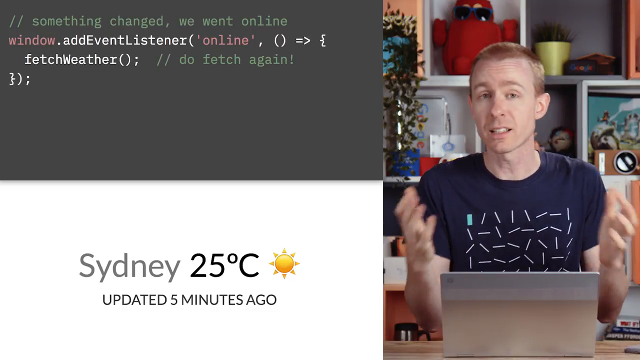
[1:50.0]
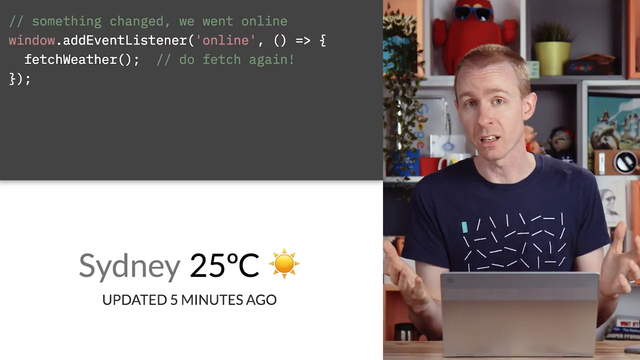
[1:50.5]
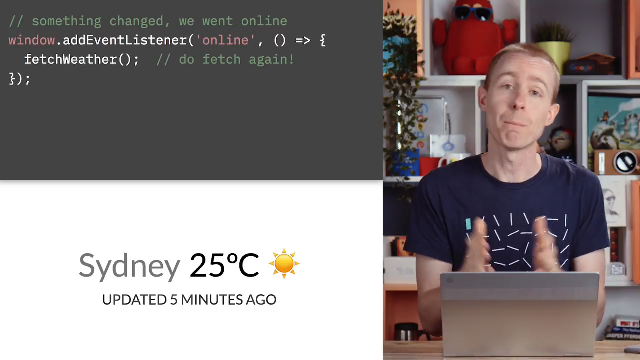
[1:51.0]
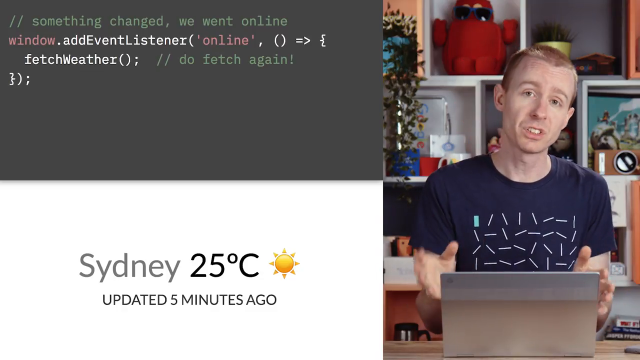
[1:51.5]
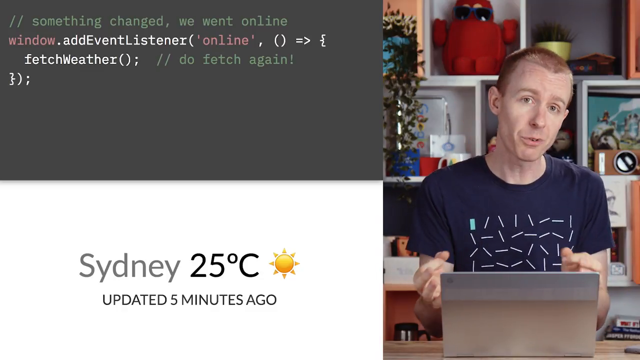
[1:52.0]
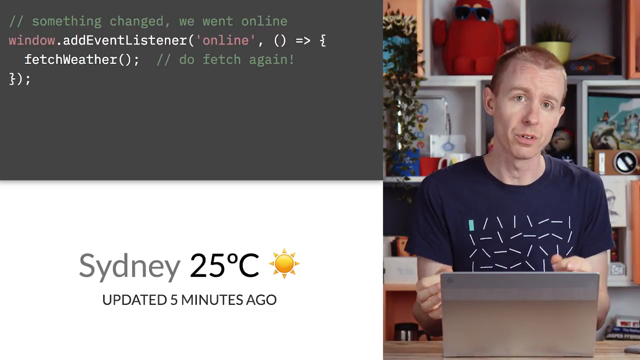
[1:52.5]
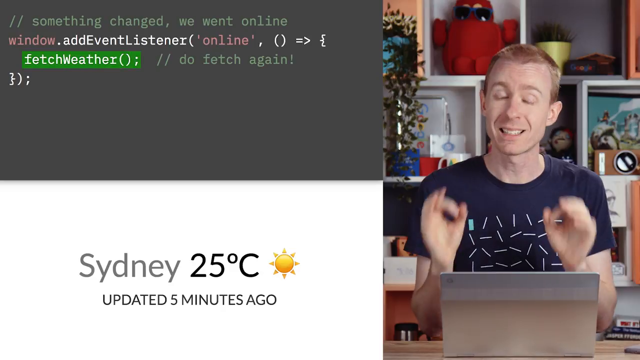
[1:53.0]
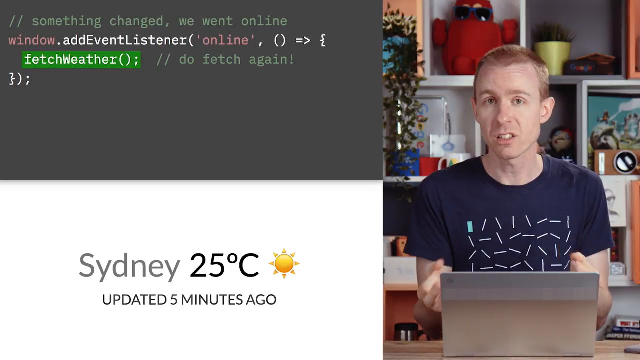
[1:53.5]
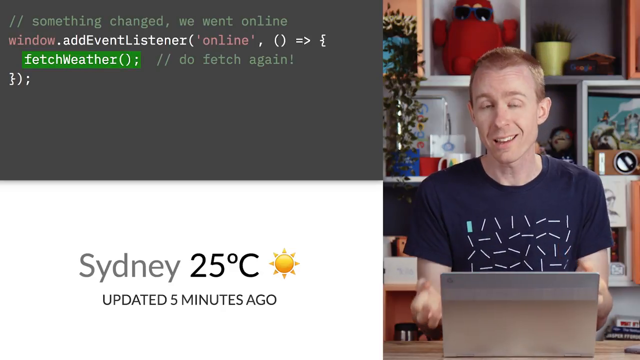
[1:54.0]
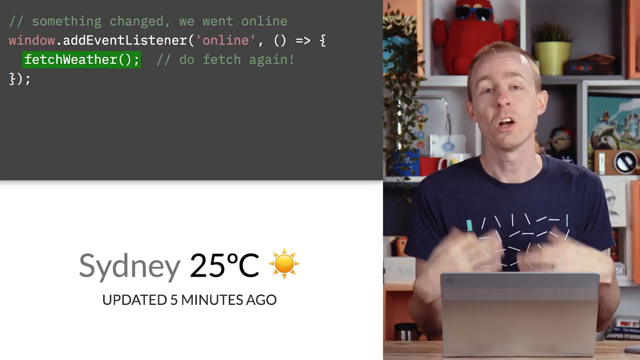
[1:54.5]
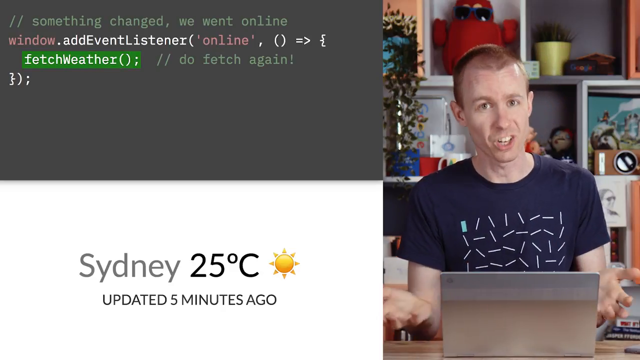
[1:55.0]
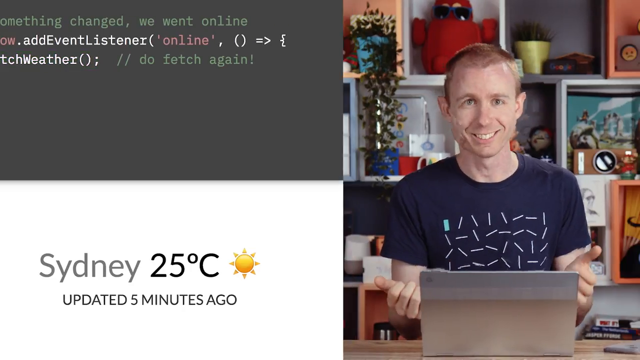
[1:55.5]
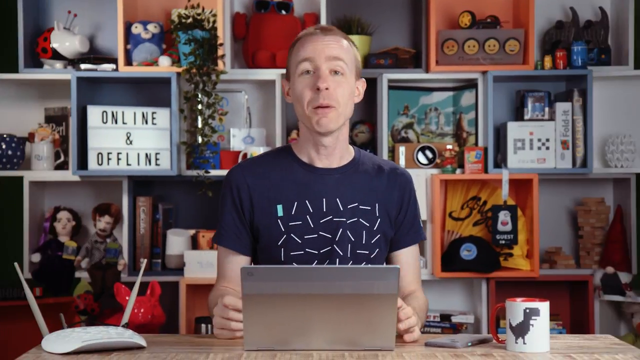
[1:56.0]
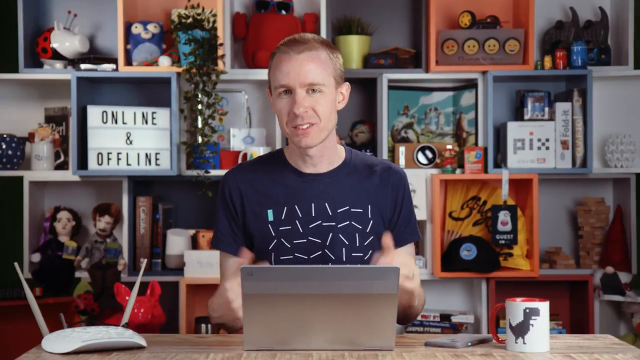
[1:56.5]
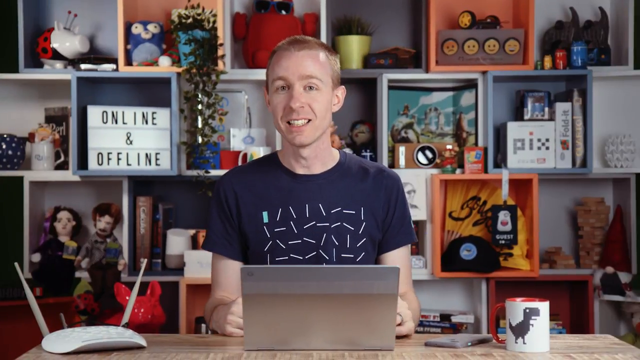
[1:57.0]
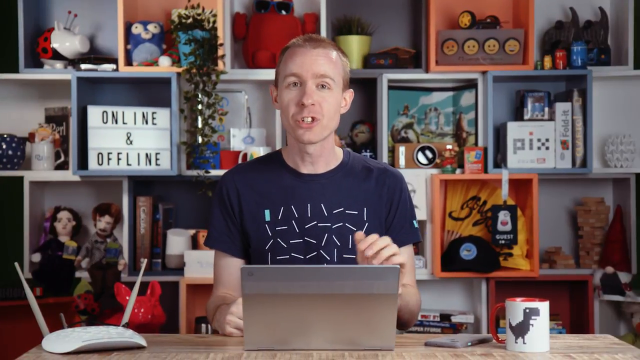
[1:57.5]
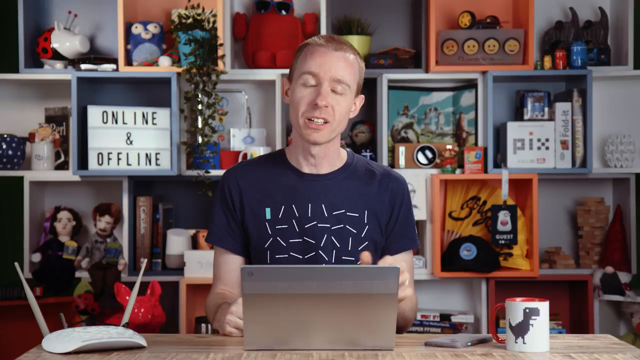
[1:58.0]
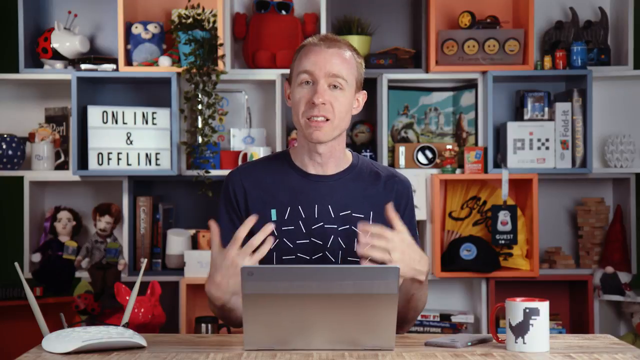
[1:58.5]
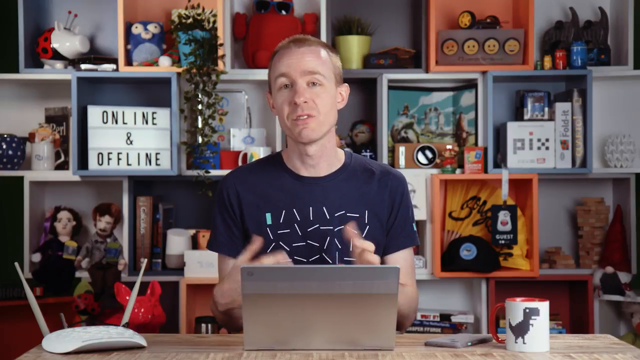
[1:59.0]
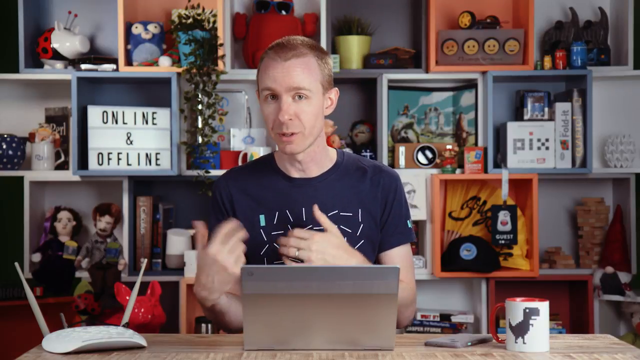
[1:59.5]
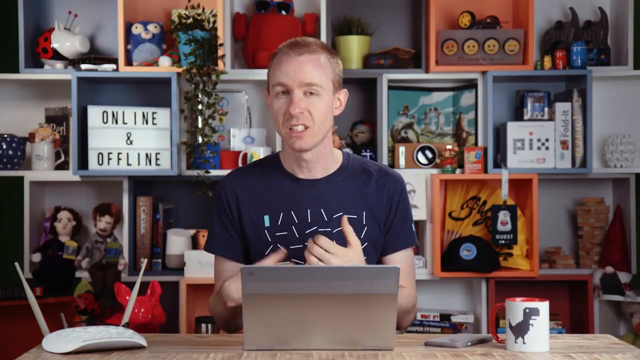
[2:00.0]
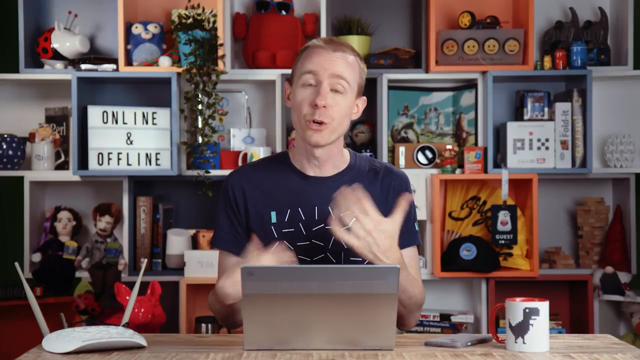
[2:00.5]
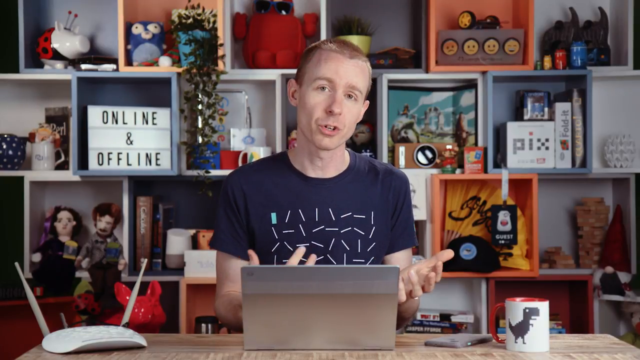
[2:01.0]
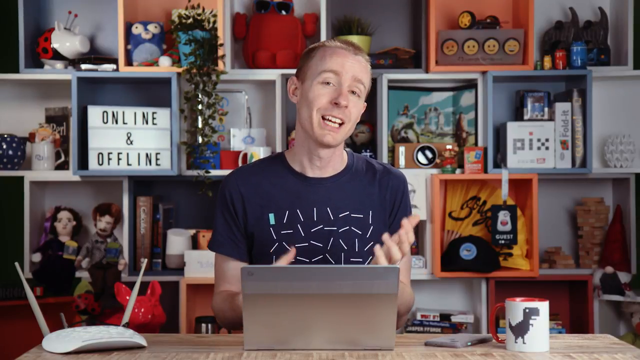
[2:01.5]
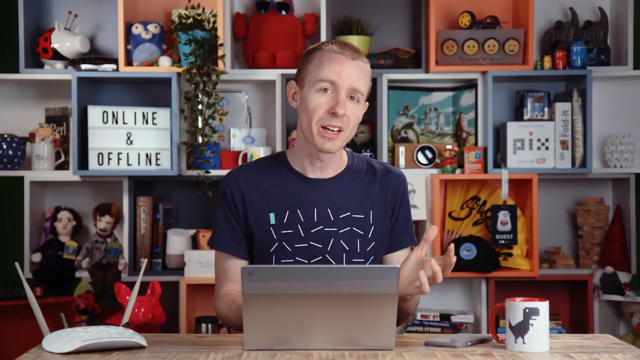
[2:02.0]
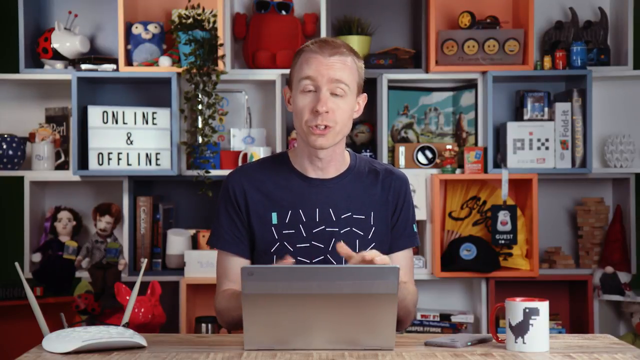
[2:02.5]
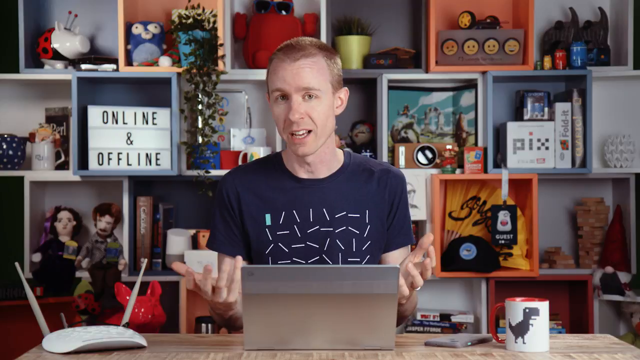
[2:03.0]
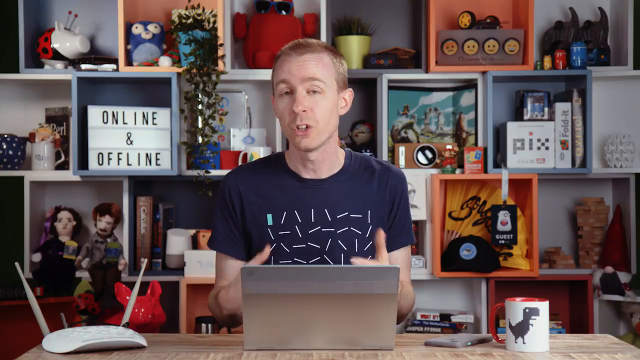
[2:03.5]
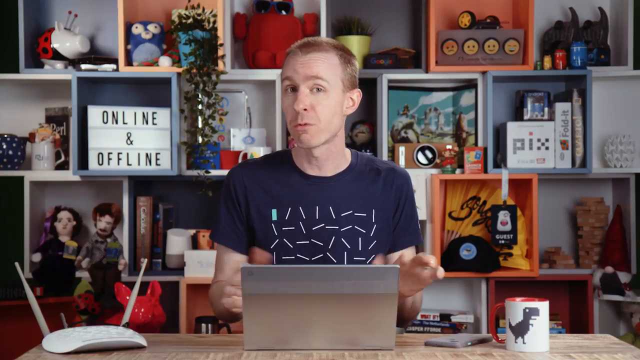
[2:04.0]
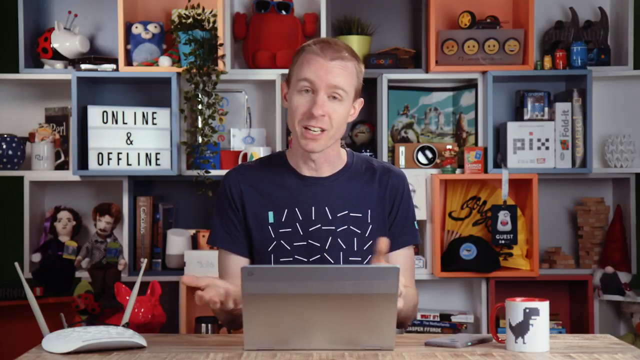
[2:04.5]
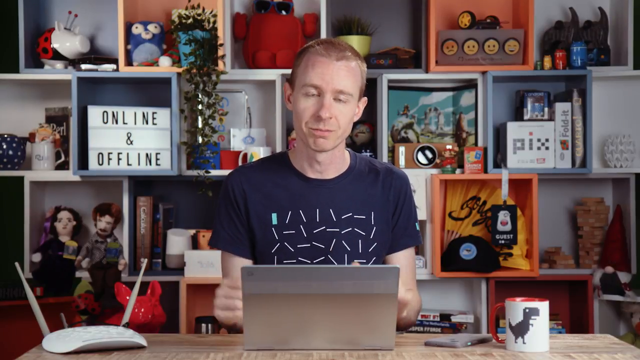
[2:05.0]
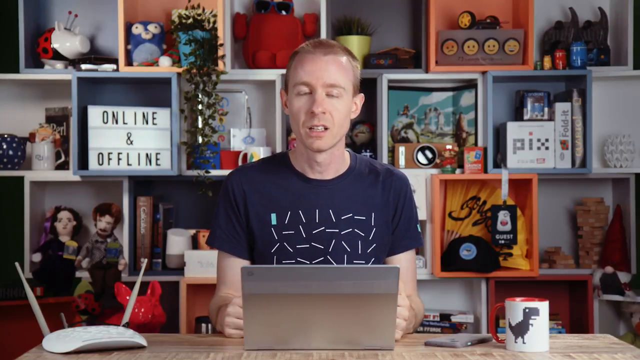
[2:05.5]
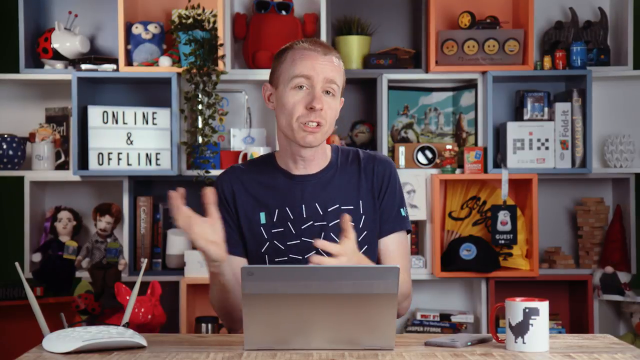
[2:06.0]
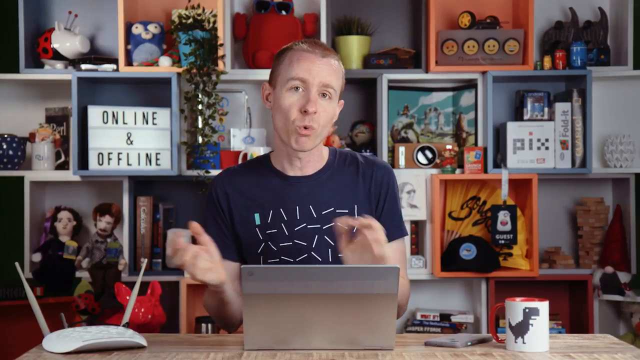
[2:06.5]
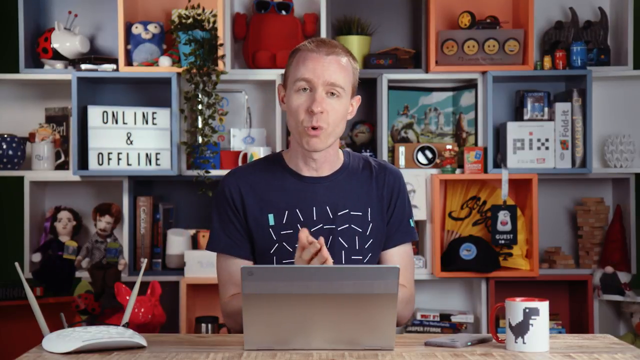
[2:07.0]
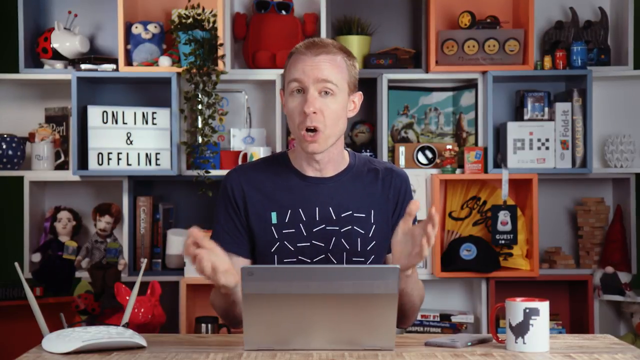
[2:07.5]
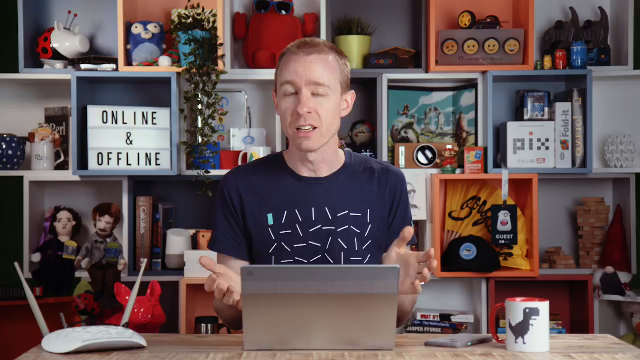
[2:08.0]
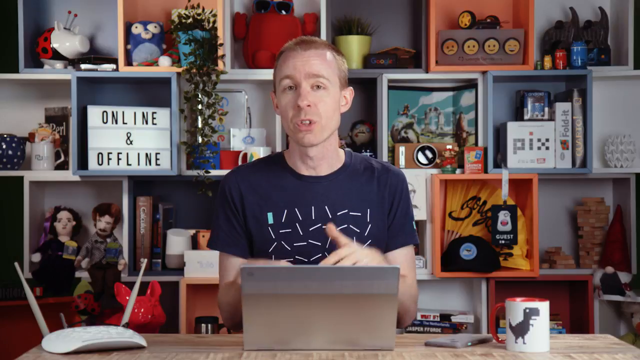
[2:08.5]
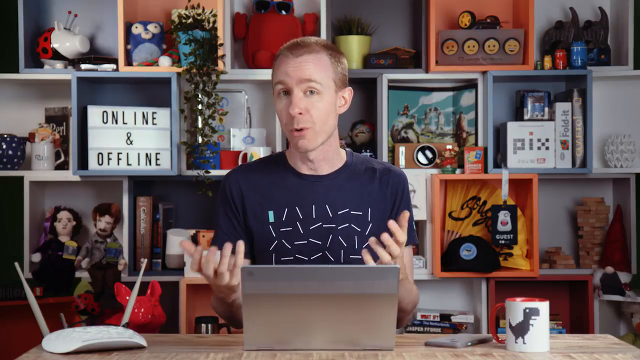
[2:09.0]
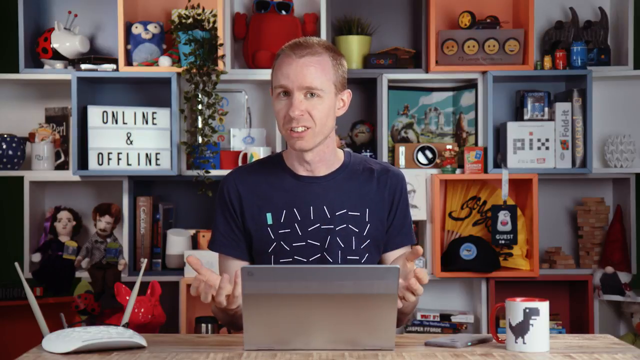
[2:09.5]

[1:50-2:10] The three-part layout continues, with the two text screens on the left and the man talking on the right. He keeps talking, his hands moving up and down and flipping over, staying in the same general area in front of him. He briefly sets his hands down on his desk before raising them again to continue gesturing. He claps his hands together briefly, separates them, and keeps turning them as he talks. For the whole segment, the man on the right side of the screen talks and gestures.